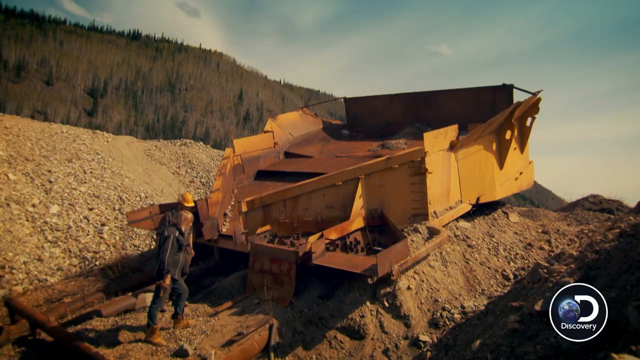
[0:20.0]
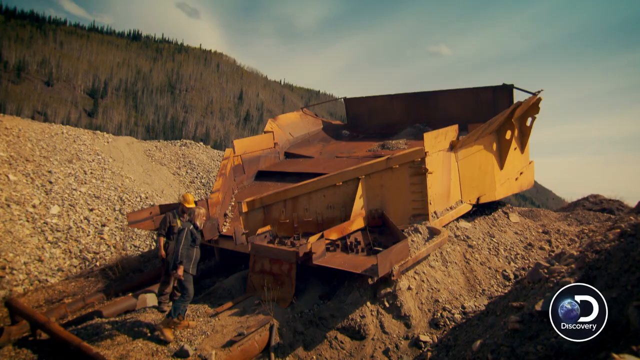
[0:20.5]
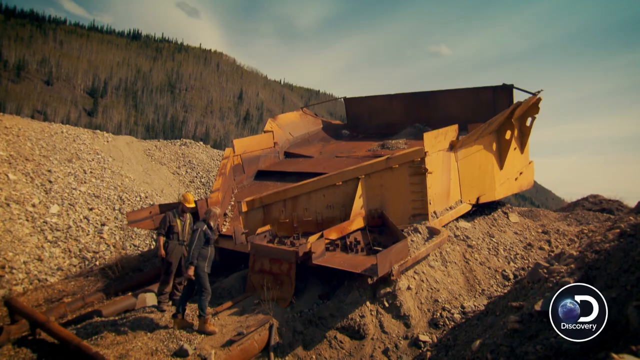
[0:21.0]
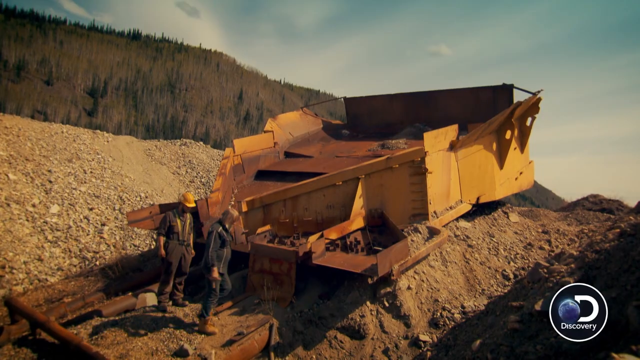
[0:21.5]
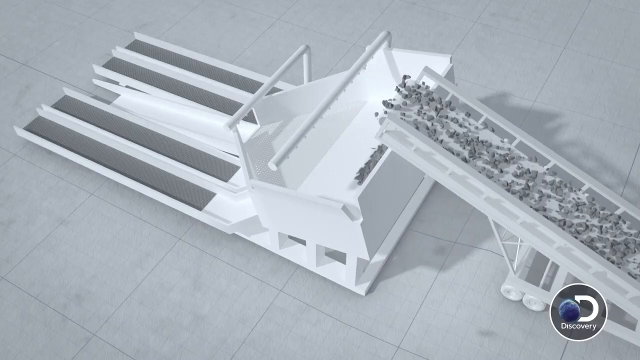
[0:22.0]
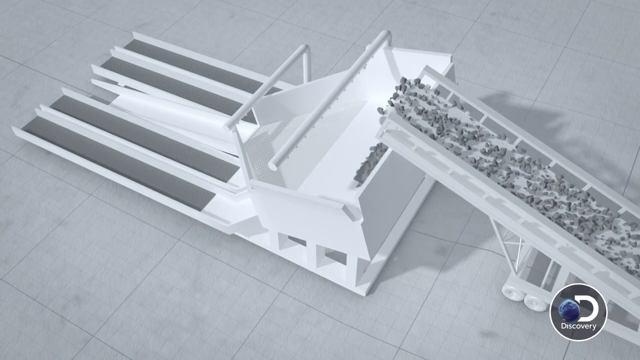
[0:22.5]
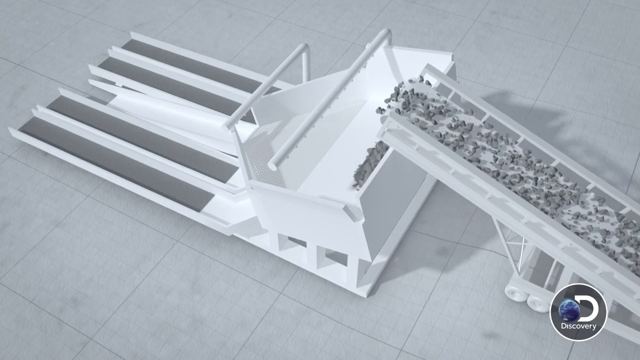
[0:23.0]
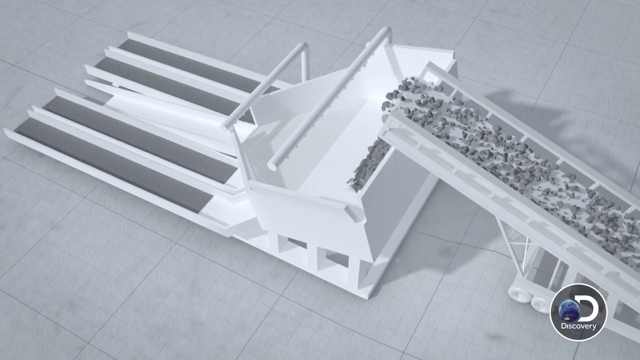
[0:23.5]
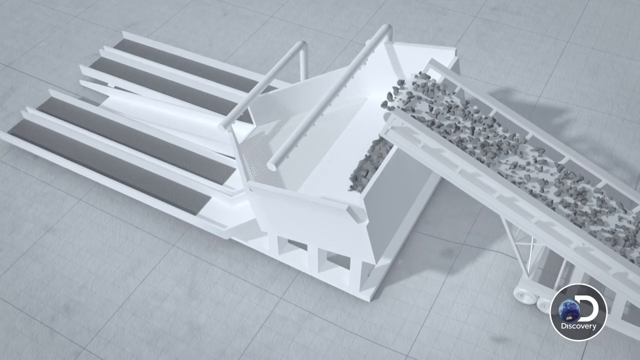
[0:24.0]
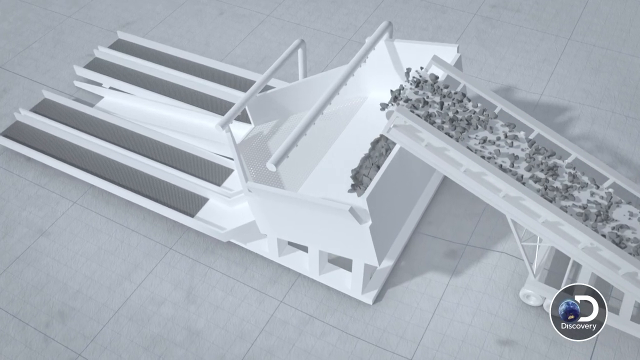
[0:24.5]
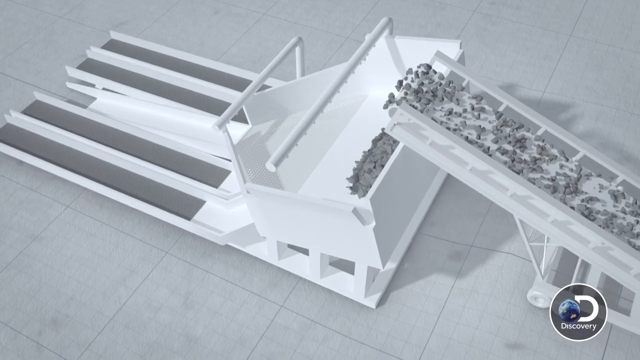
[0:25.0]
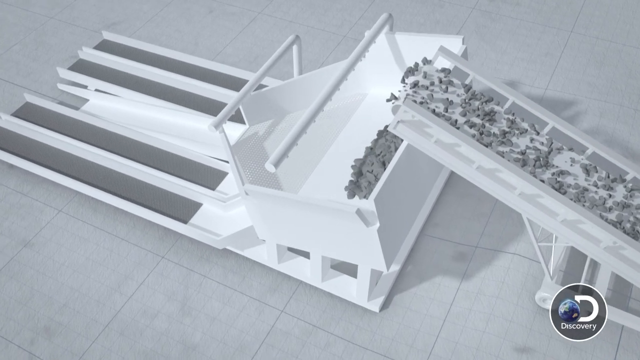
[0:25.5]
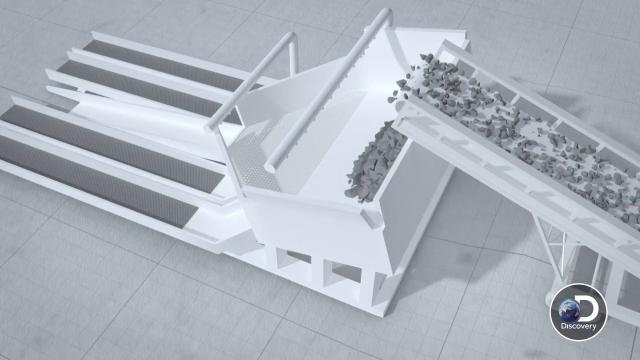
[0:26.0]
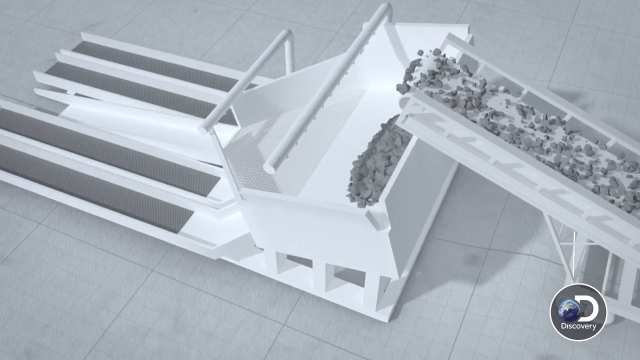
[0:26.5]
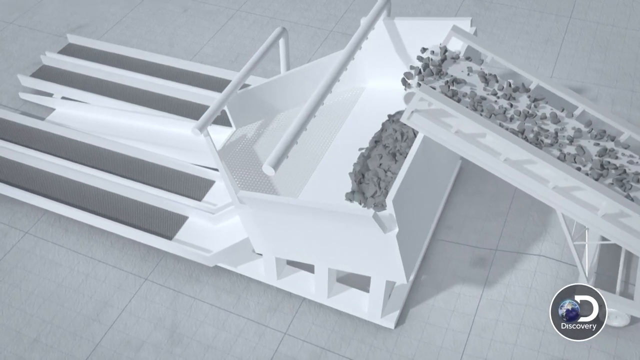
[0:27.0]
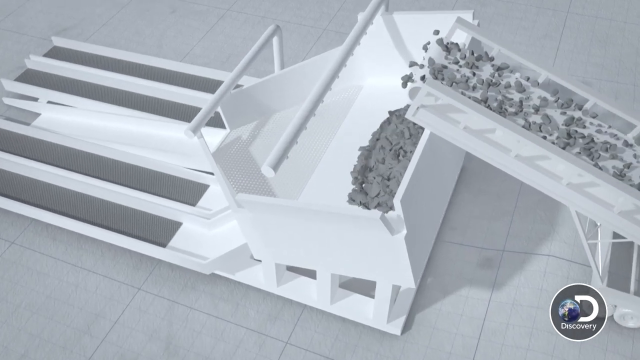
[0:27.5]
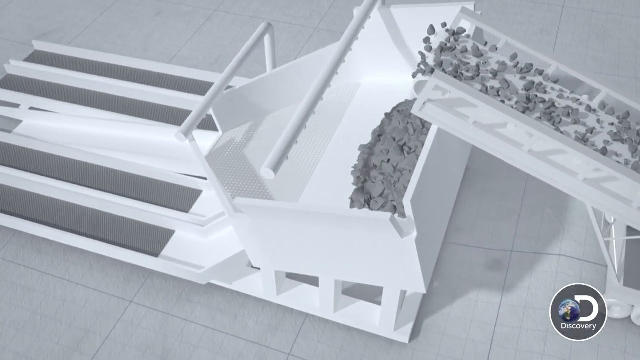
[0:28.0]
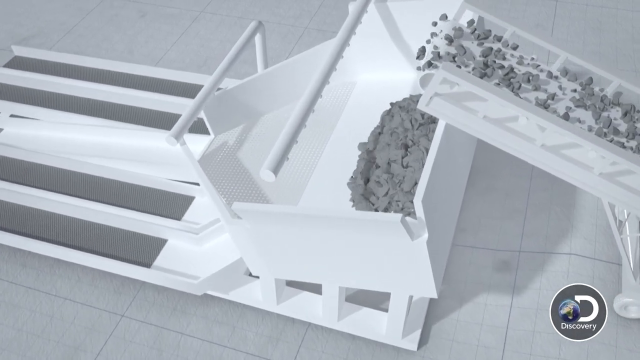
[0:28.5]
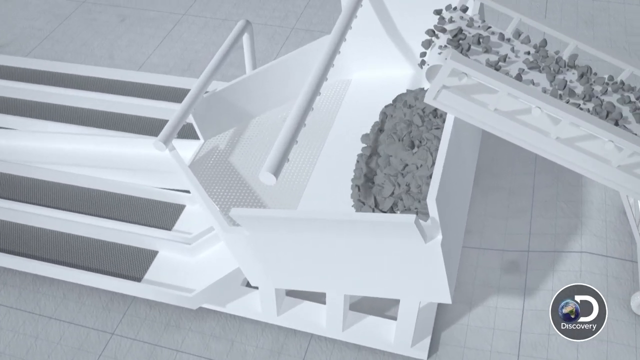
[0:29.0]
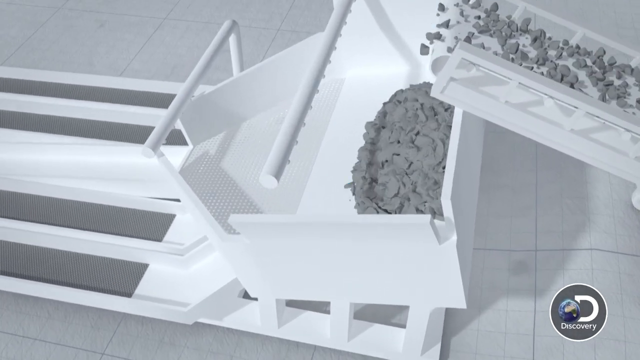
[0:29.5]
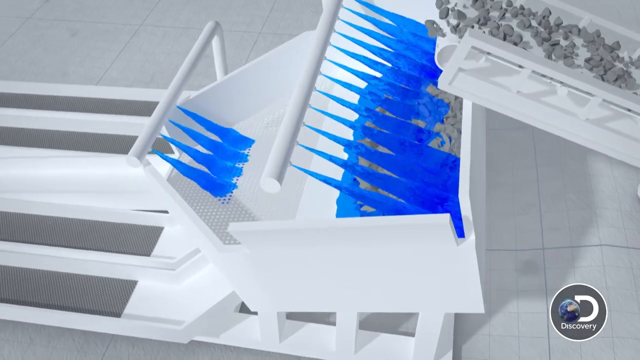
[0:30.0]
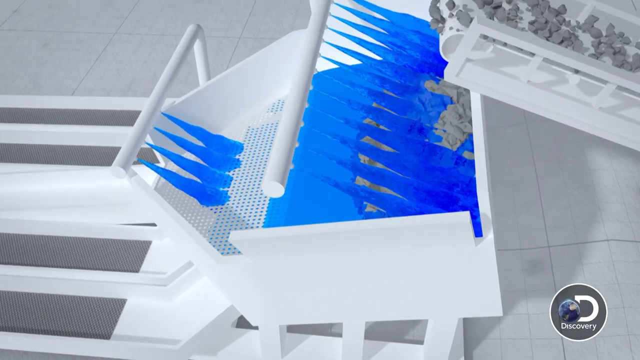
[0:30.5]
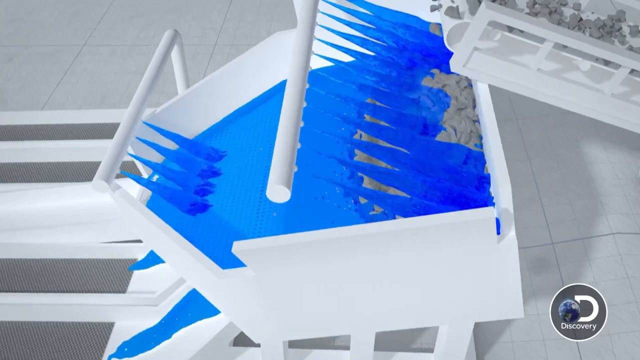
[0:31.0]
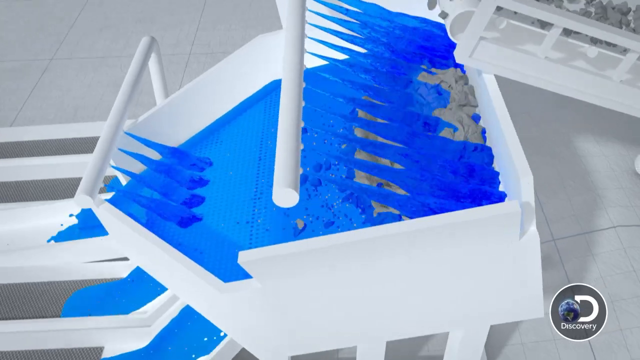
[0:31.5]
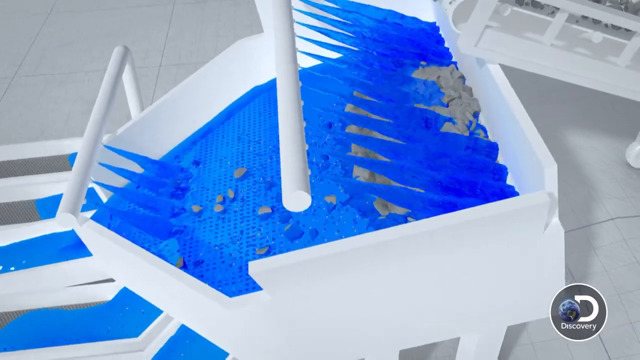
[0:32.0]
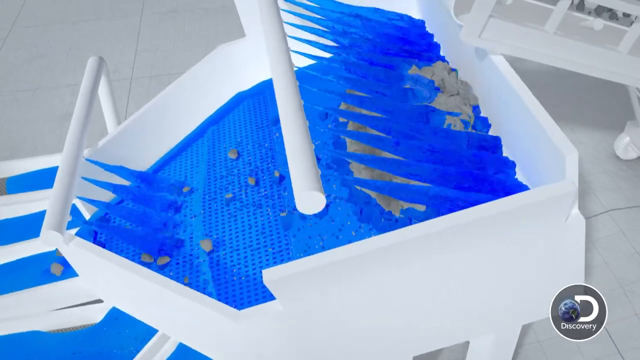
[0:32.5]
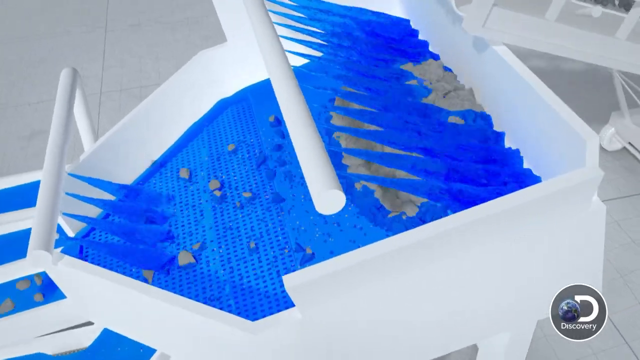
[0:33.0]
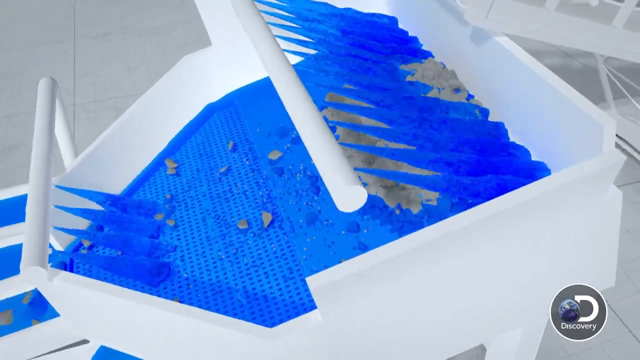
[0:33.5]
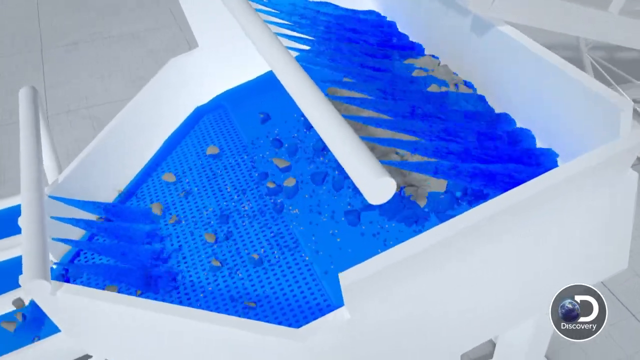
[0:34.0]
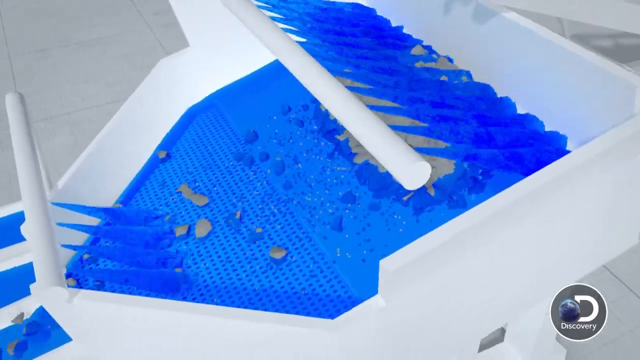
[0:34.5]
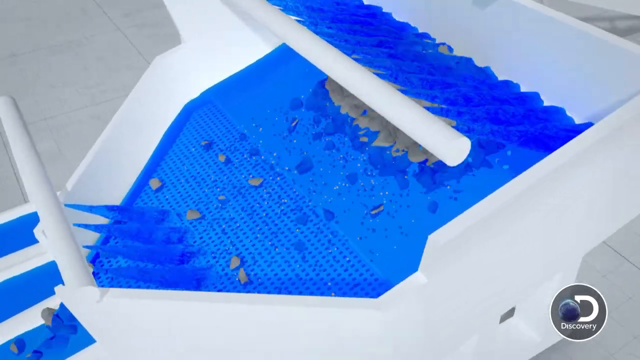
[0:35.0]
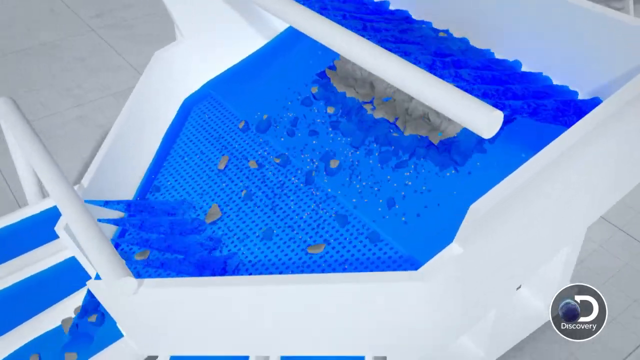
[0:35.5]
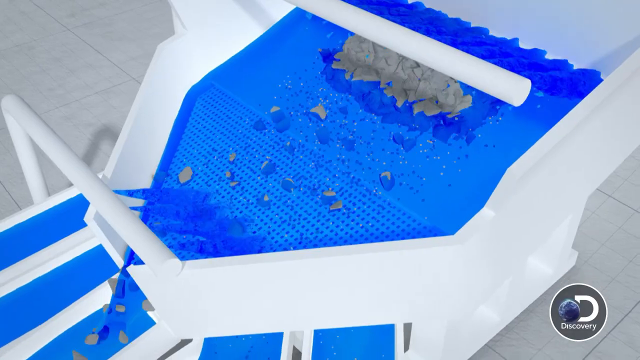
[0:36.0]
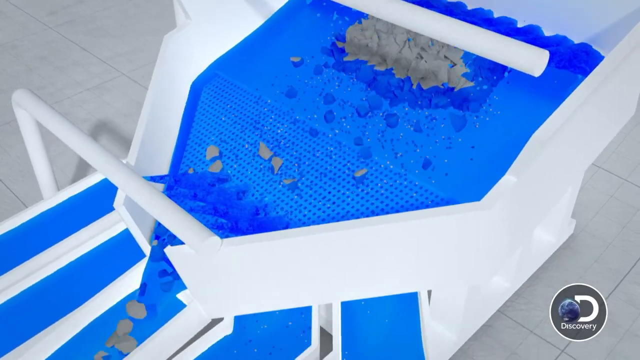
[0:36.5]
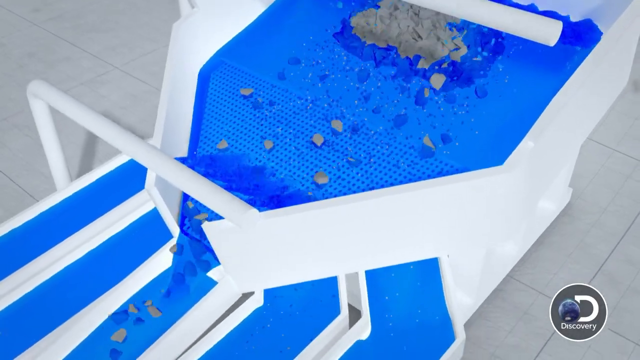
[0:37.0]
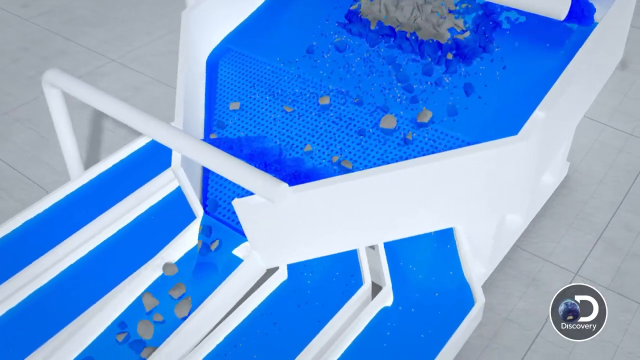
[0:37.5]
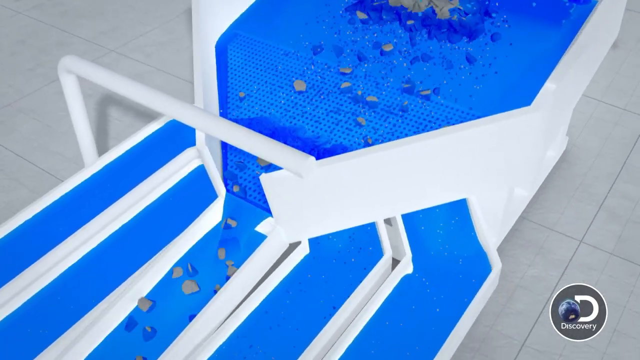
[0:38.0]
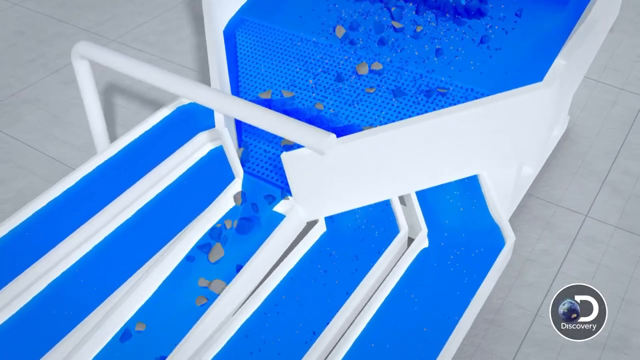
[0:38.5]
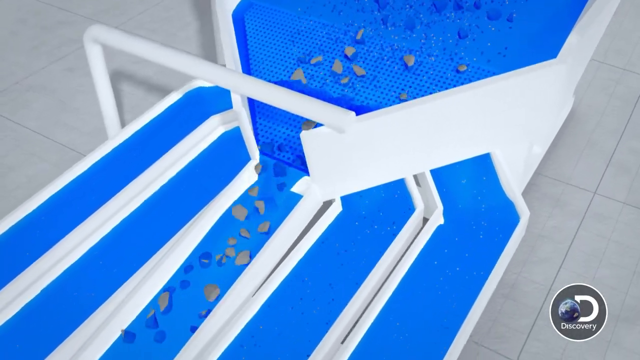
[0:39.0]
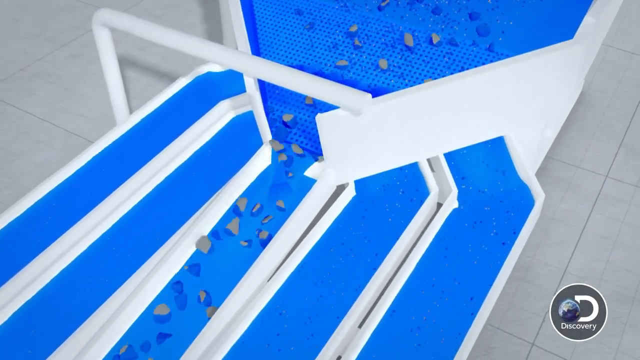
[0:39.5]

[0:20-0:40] A large piece of equipment appears, possibly a sorting machine for gold. It is an off-goldish color and extremely large, and two men at the bottom left of the screen walk in front of it. A black, white and gray computer graphic follows, apparently showing how the equipment is supposed to work. On the right, a conveyor belt carries little pieces of presumably gold upward and drops them into a rectangular box, possibly some type of sorting container. The angle changes as if a camera were moving to the left and zooming in. Suddenly blue spikes show up inside the large white equipment on the screen and begin to flow; it is water, possibly being used to sort the mud and gold through the different sections of the machine. The chunks from the conveyor belt, now in the machine, flow with the water from a larger area into a smaller area that runs downward and to the left.